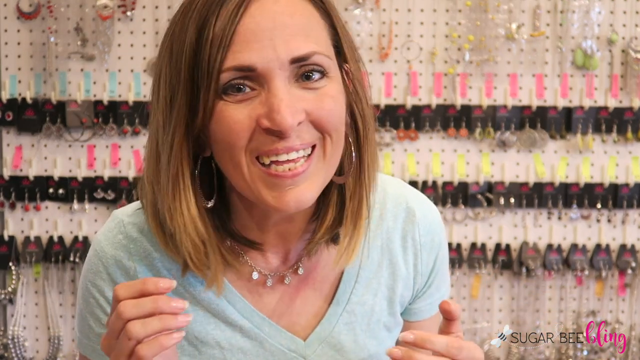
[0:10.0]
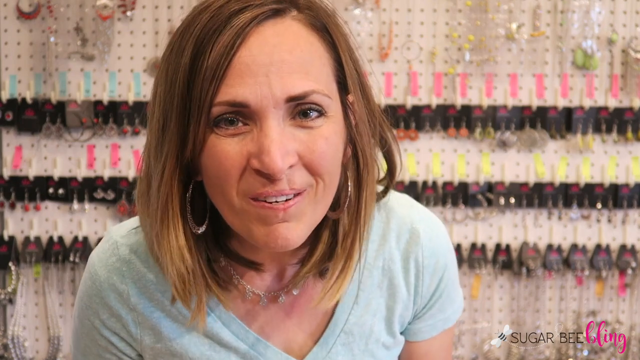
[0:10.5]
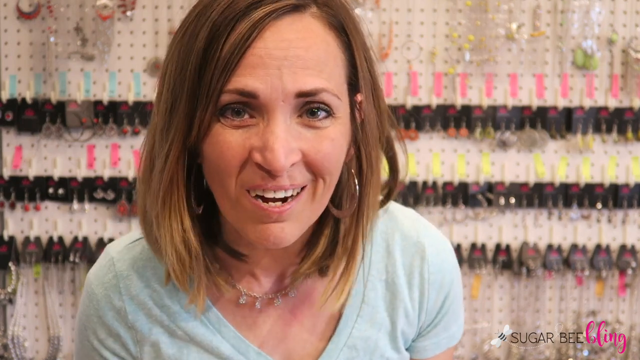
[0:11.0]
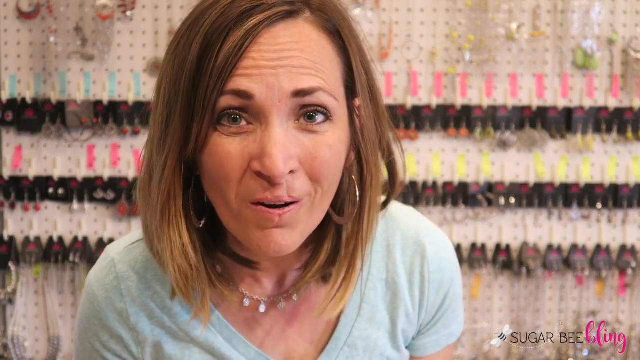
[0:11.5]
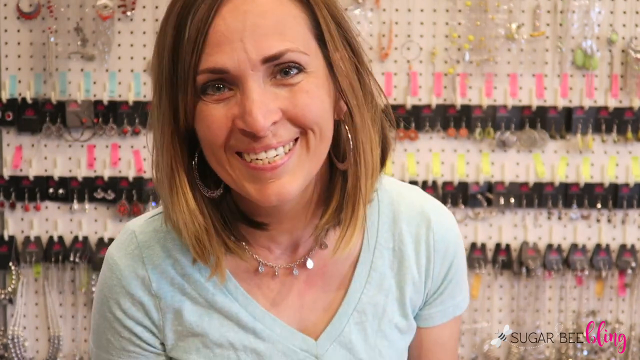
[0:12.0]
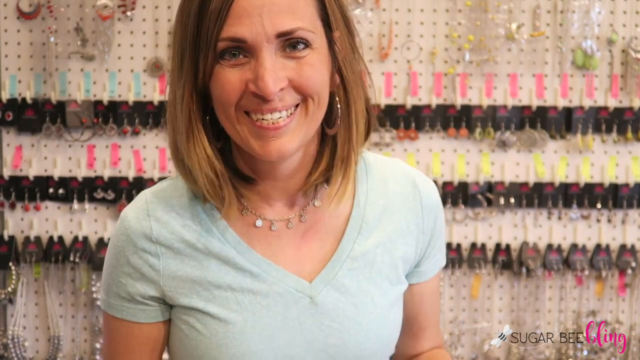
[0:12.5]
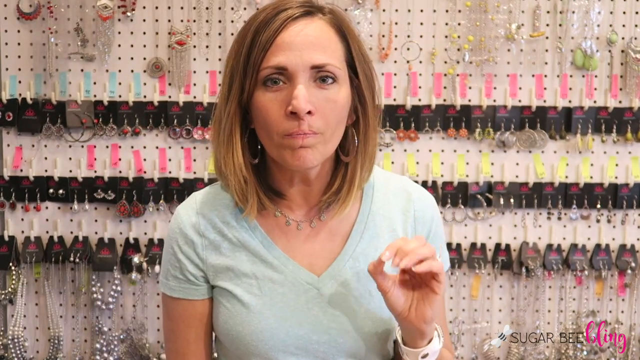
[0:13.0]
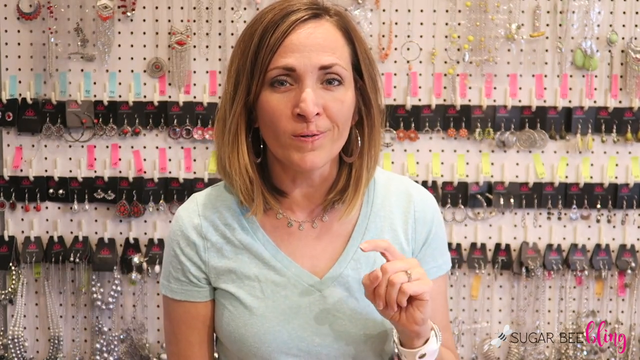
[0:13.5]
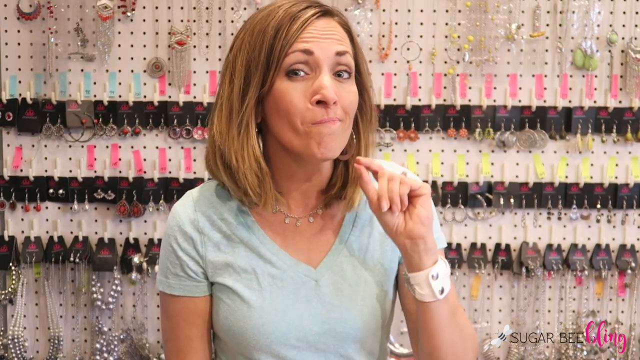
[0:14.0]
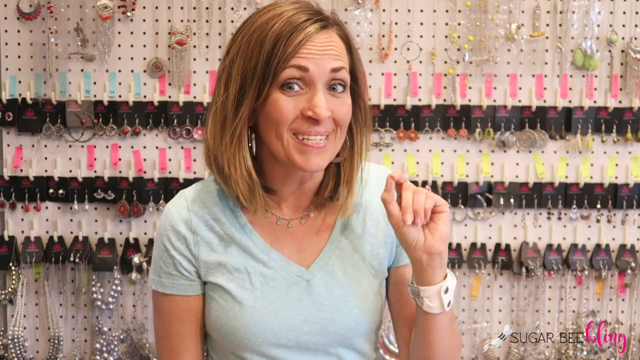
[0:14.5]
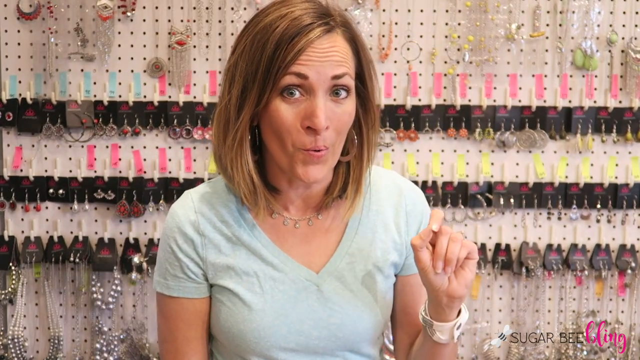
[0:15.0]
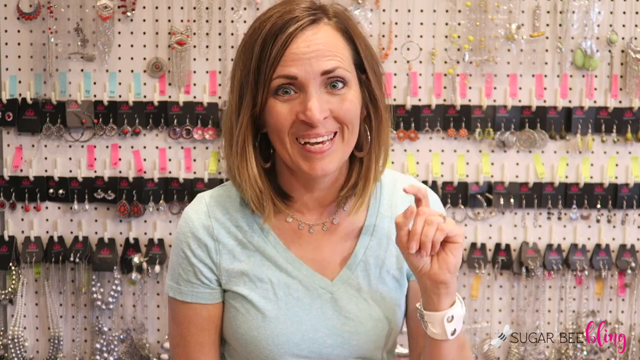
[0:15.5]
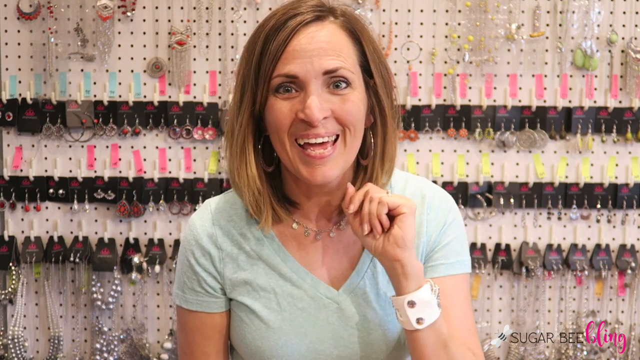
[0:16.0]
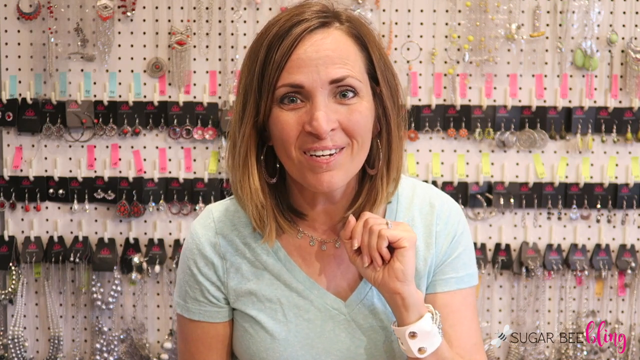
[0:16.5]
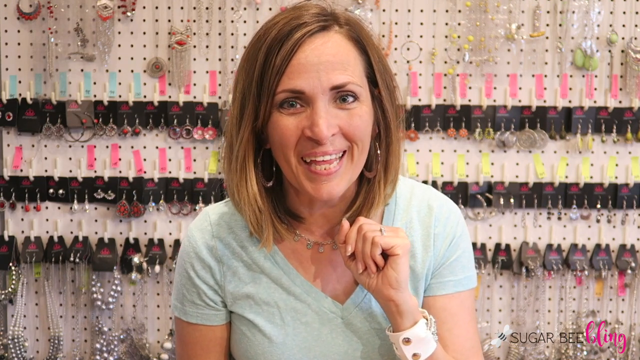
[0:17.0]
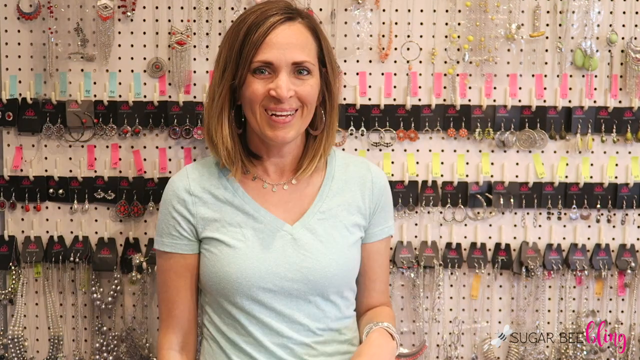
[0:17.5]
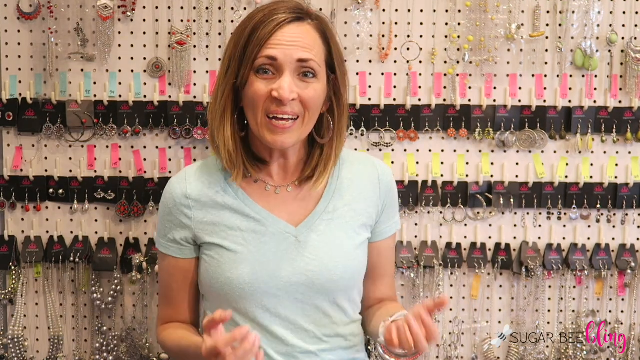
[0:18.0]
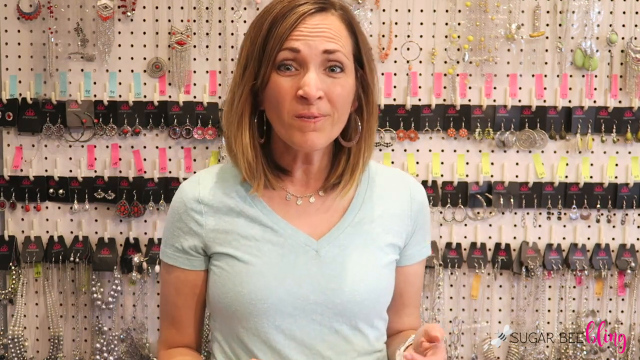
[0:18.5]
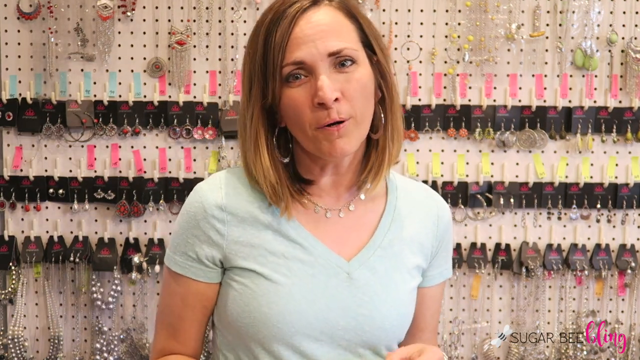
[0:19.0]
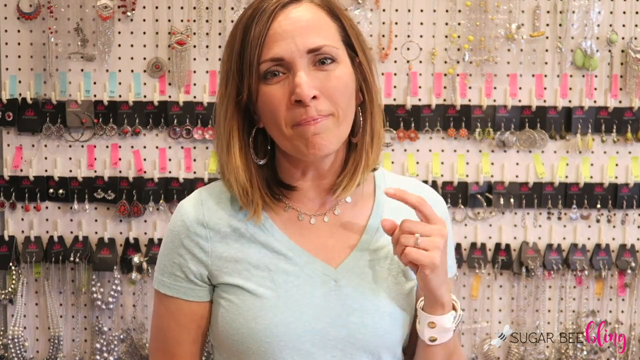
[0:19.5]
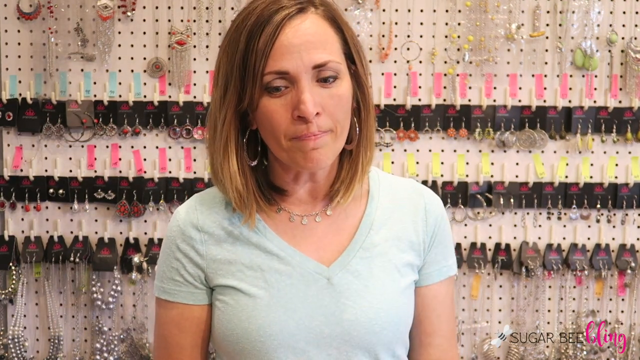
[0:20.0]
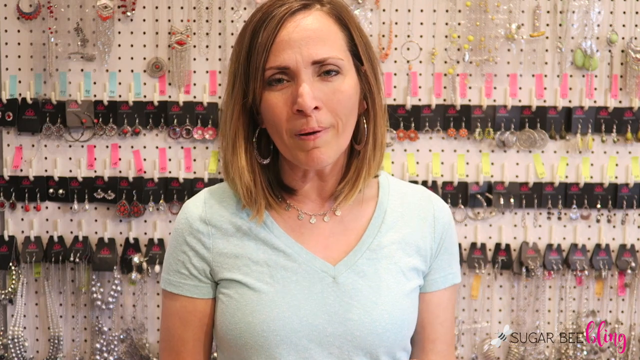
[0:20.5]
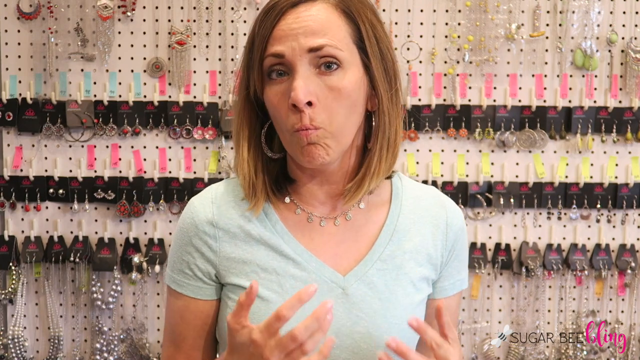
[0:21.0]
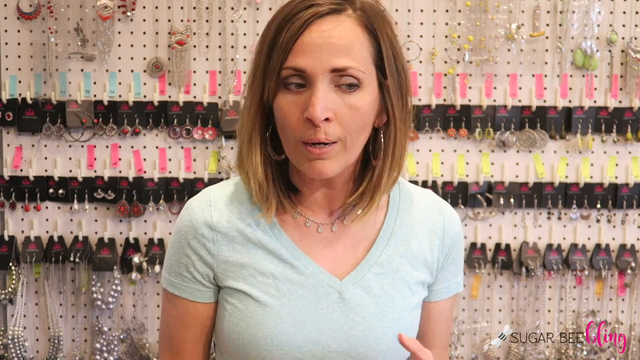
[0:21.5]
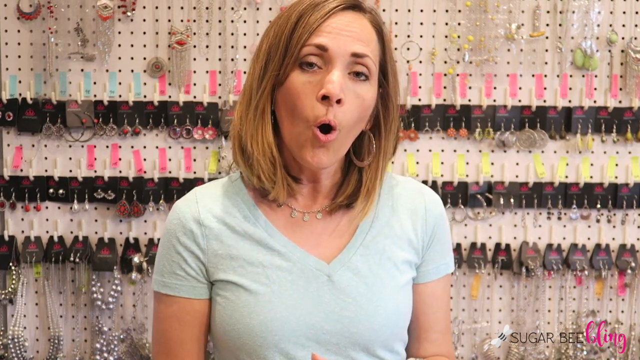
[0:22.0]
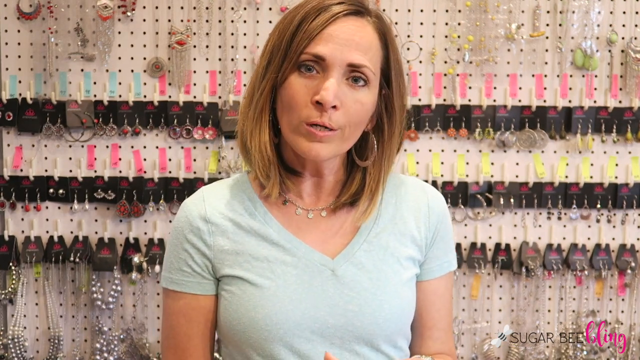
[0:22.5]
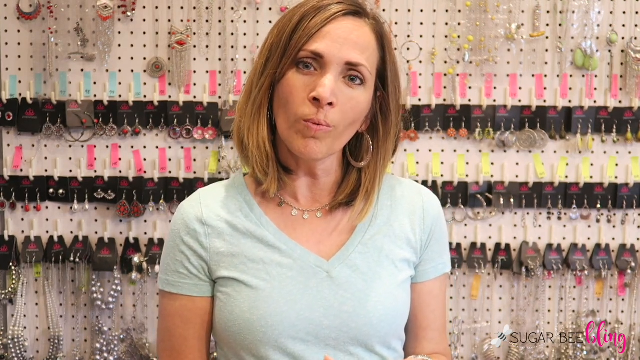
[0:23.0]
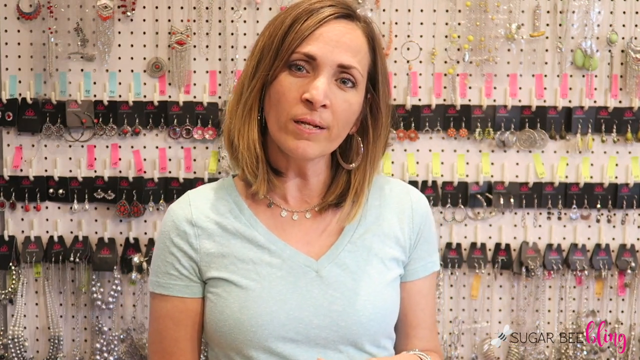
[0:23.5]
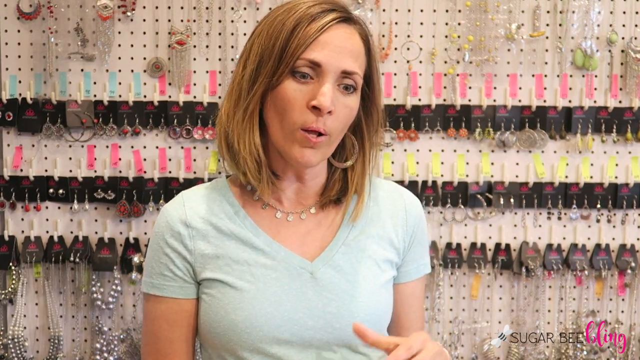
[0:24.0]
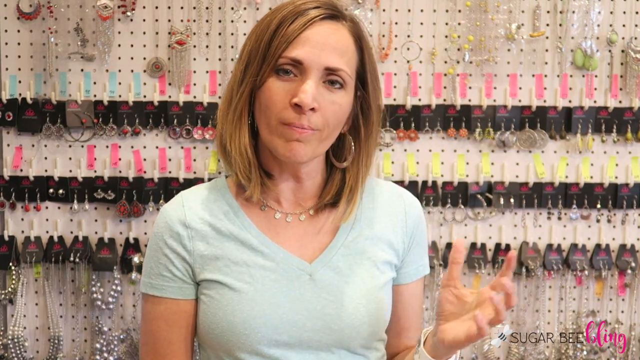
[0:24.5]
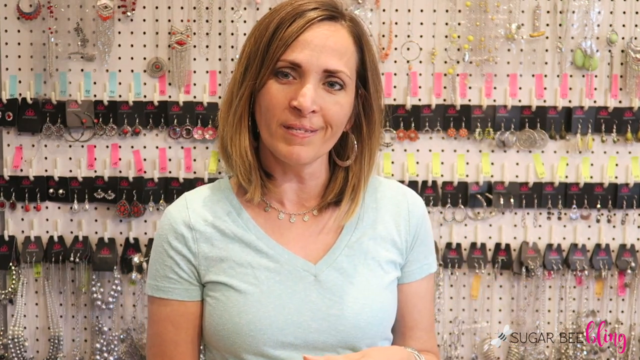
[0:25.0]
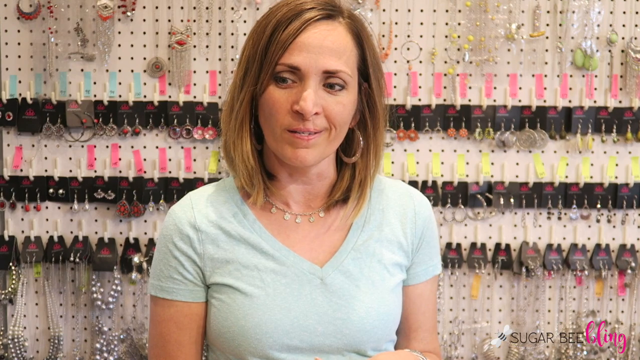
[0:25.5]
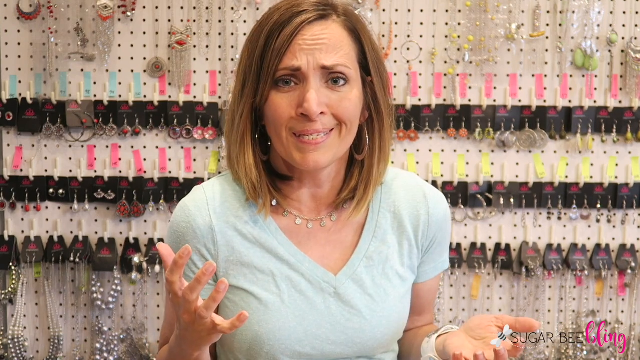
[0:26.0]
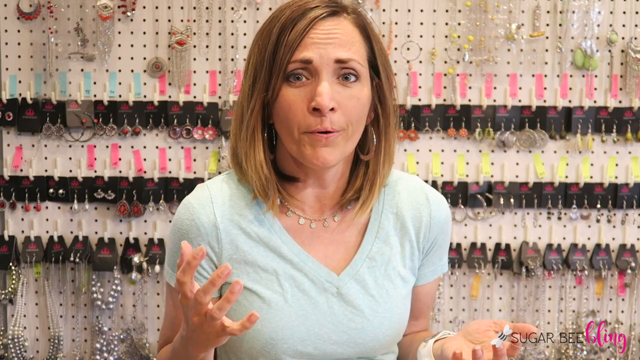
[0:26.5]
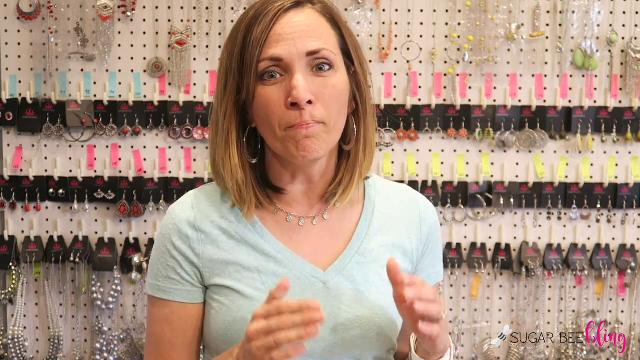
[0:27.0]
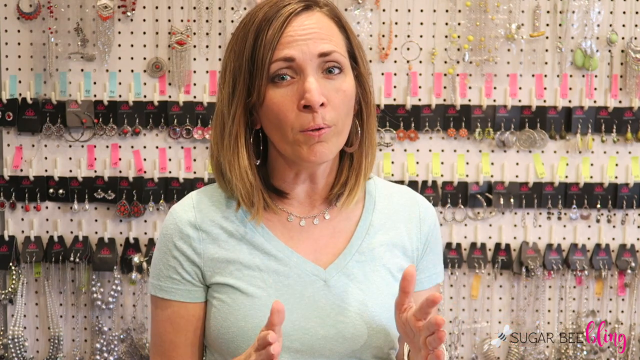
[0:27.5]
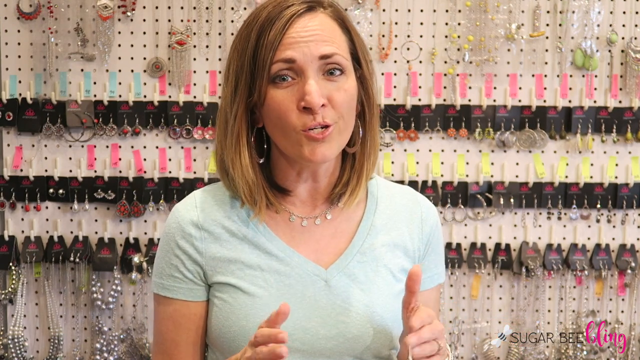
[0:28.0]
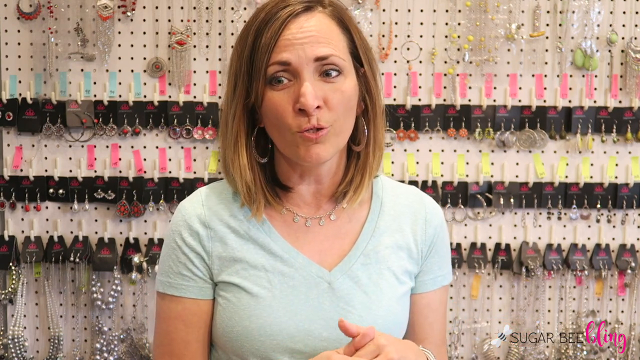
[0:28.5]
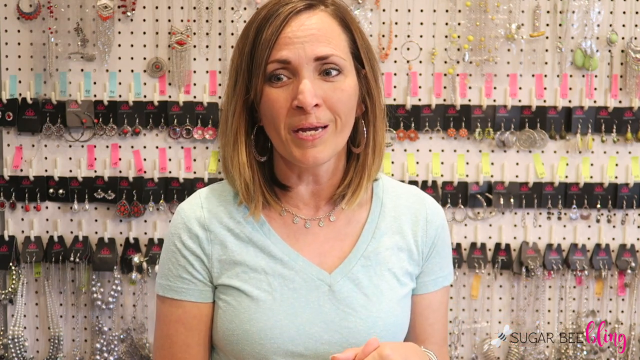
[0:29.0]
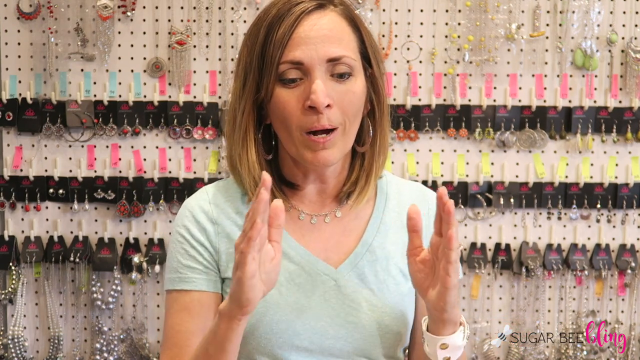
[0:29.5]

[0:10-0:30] The woman with short blonde hair, blue eyes and delicate makeup wears a big circle-shaped earring, a necklace with diamonds on it and a blue T-shirt, and her hands are manicured. She talks toward the camera and gestures with her hands as she explains the jewelry. There are about three cuts in this stretch of the video. Because of the jewelry behind her, she appears to be a seller of the jewelry, possibly trying to sell it to viewers.